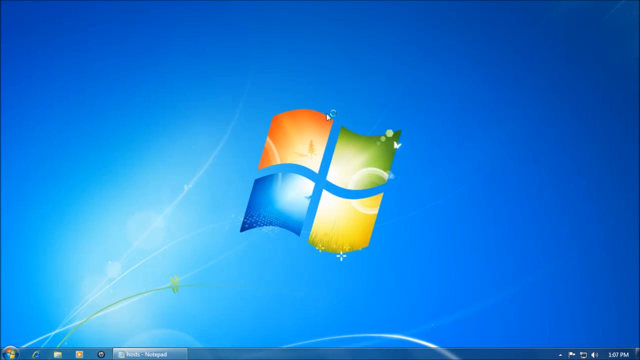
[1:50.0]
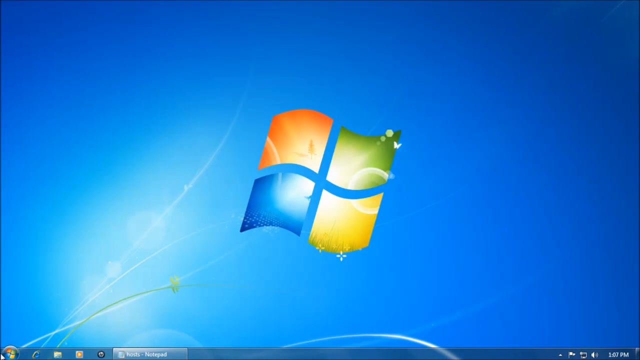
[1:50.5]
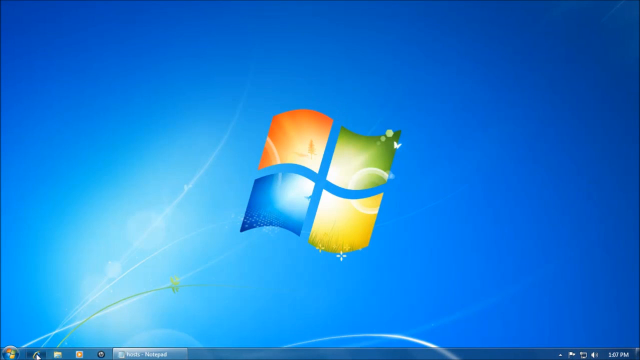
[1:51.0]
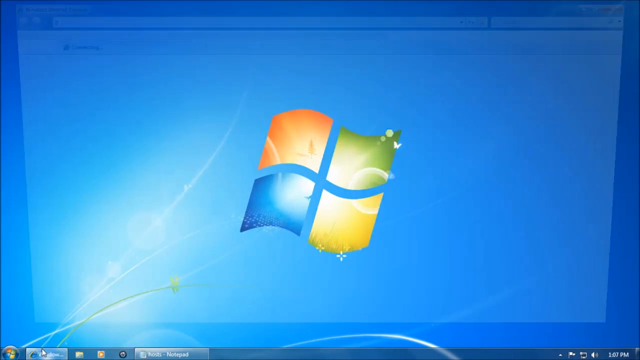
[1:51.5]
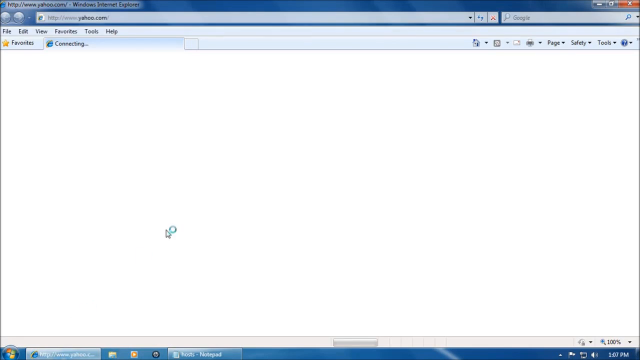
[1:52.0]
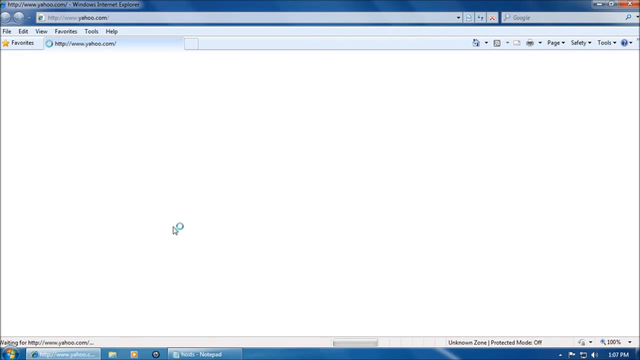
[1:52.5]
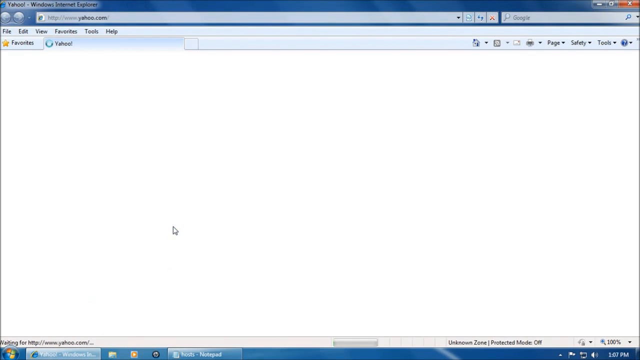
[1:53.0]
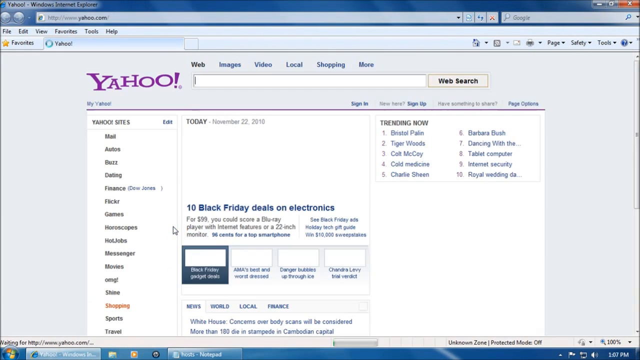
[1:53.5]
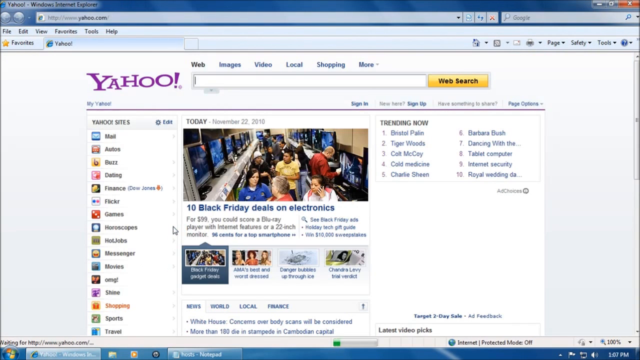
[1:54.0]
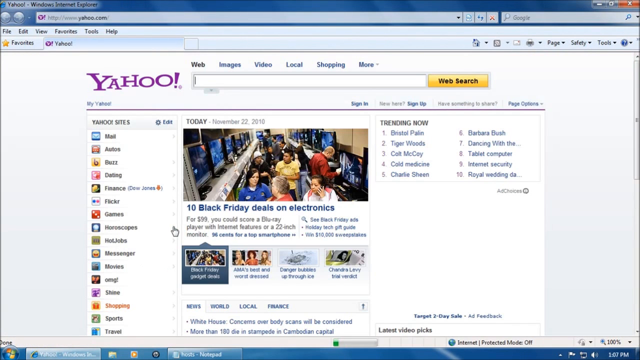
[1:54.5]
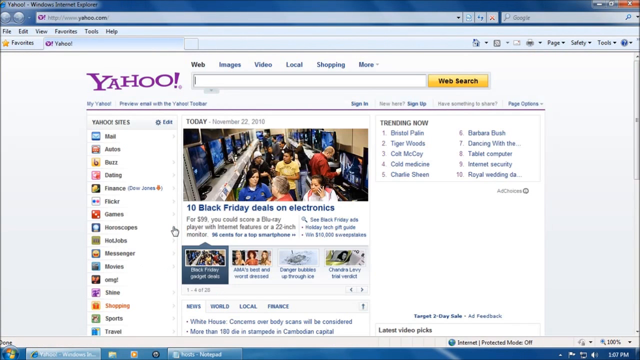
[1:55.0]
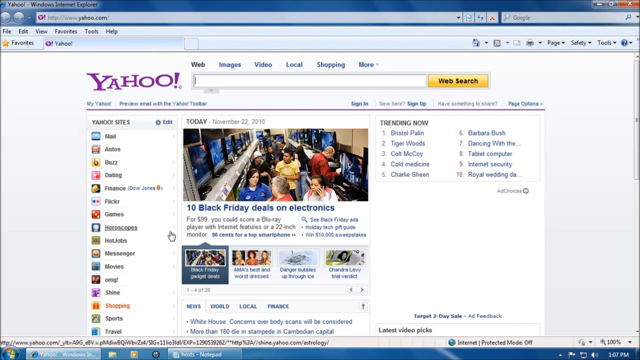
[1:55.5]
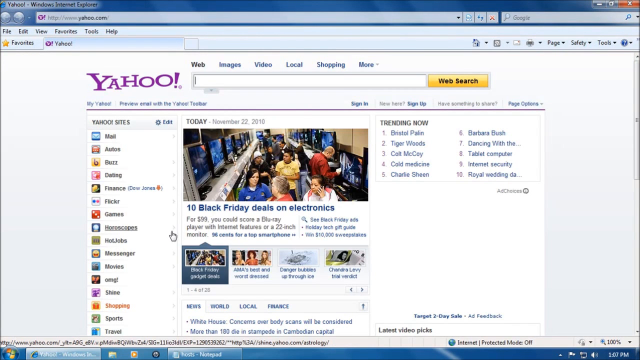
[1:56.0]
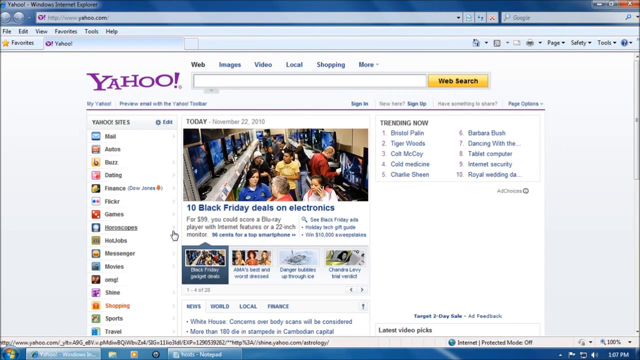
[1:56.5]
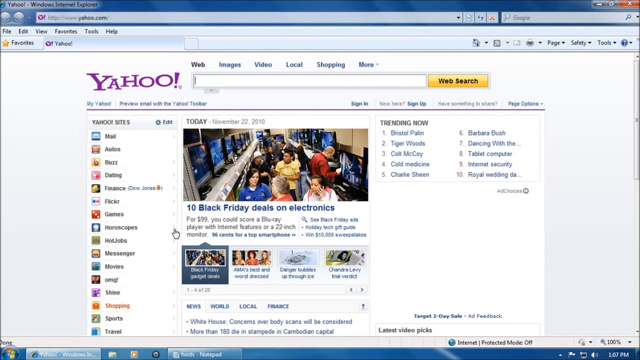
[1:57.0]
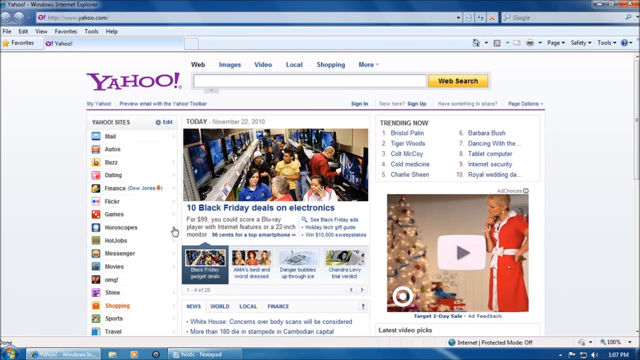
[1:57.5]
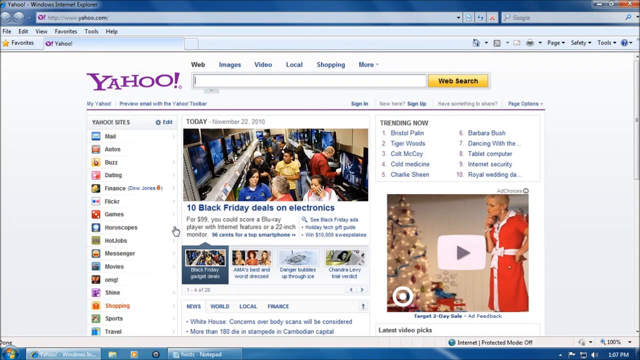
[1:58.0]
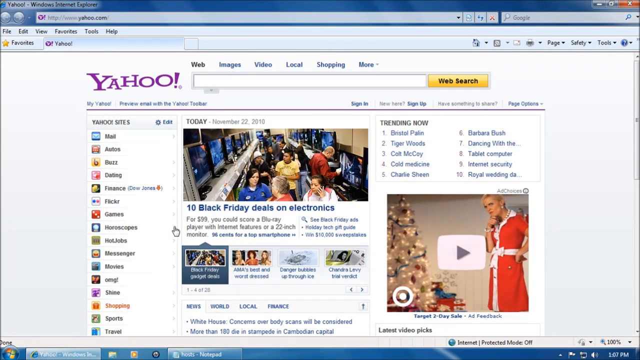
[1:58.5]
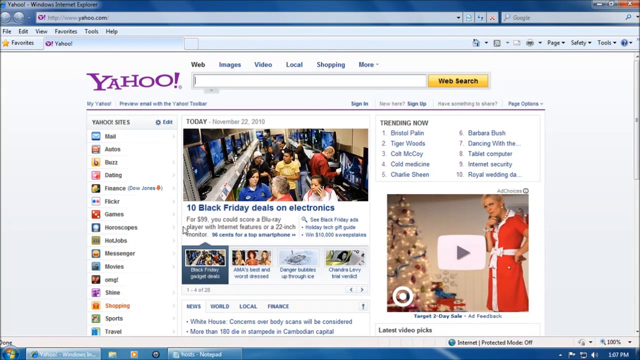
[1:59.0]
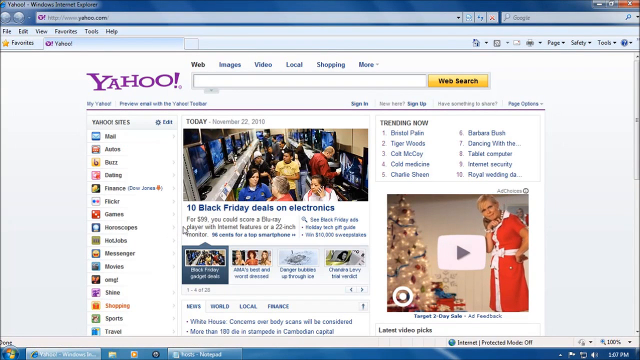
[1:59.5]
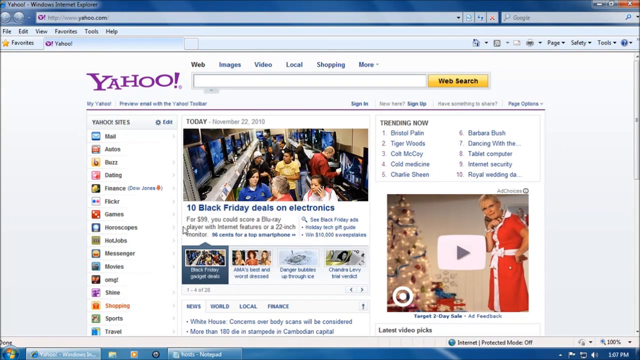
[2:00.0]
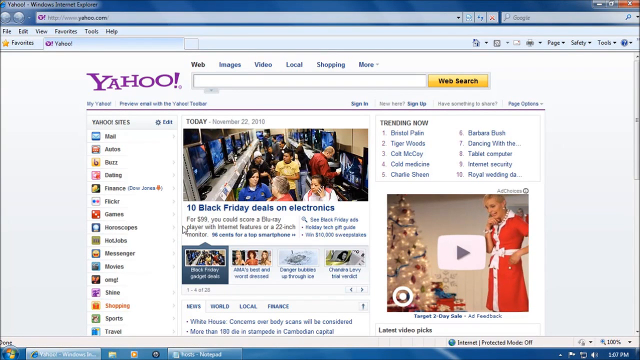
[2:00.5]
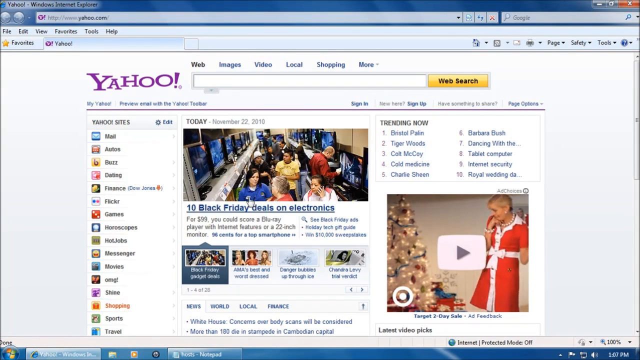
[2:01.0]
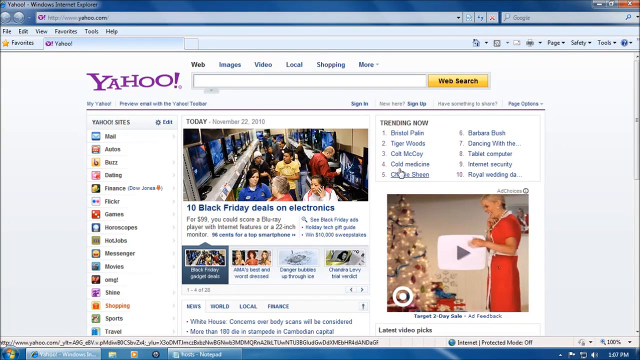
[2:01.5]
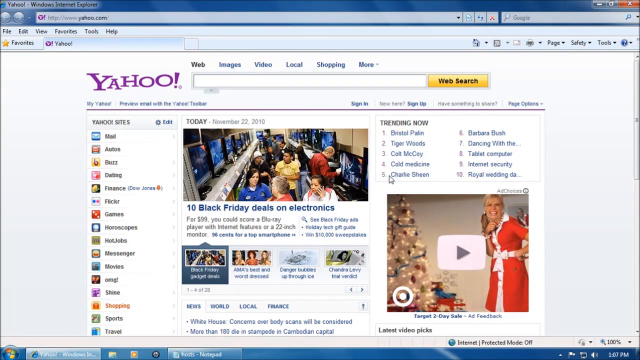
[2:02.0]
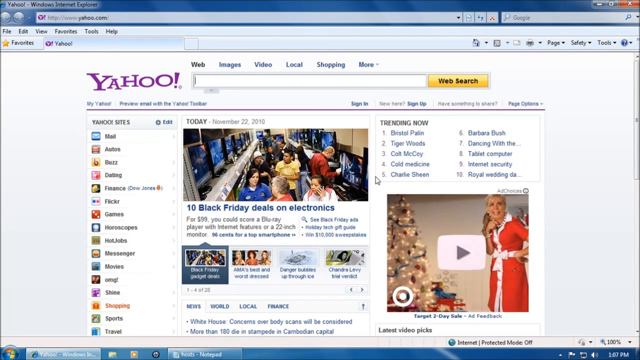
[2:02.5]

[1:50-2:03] "yahoo" is entered from the home page and the Yahoo site opens, showing sections such as news, mail, games, movies and videos. An image shows a lady in a Christmas dress next to a decorated Christmas tree, smiling. The search options include Web, Images, Local, Shopping and More. There is a "10 friday deals on electronics" advertisement on Yahoo, apparently for a sale.